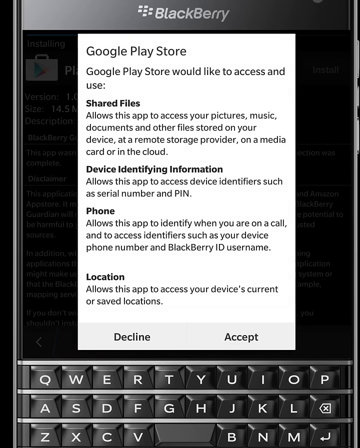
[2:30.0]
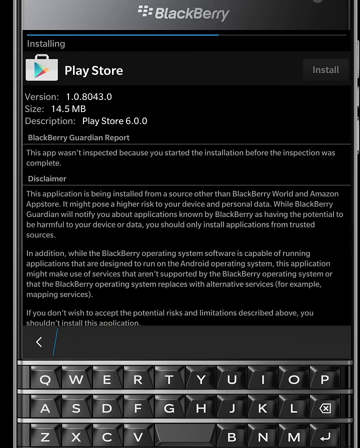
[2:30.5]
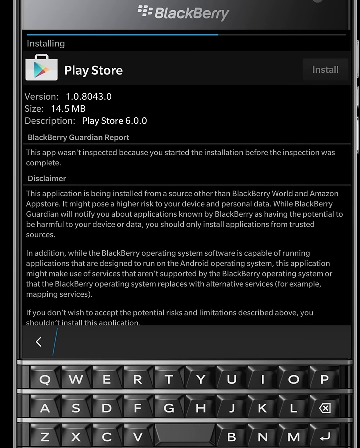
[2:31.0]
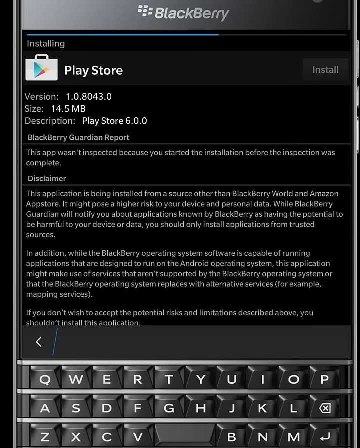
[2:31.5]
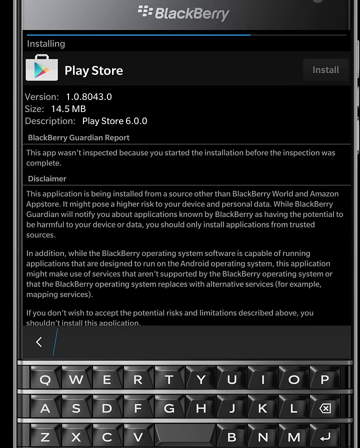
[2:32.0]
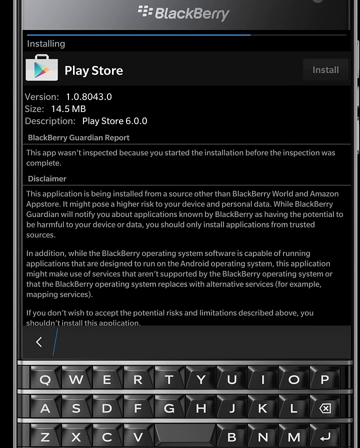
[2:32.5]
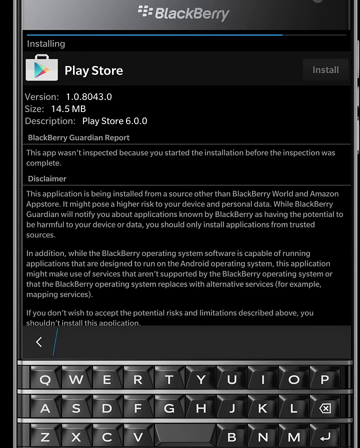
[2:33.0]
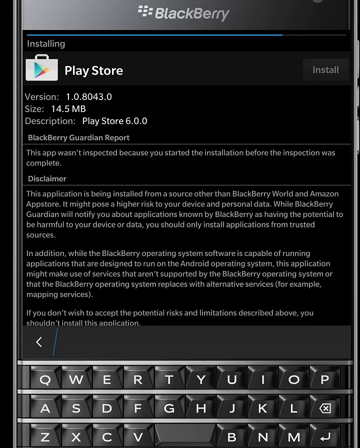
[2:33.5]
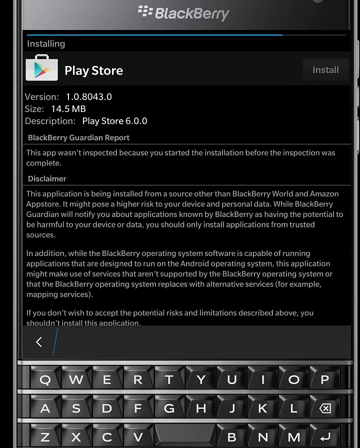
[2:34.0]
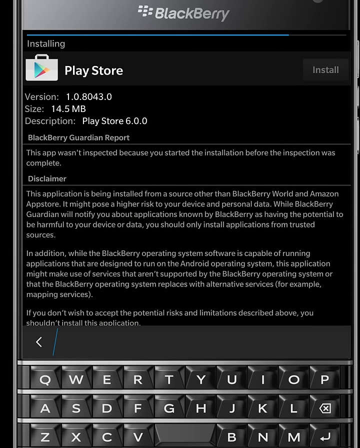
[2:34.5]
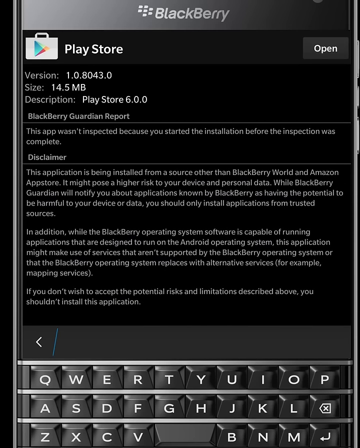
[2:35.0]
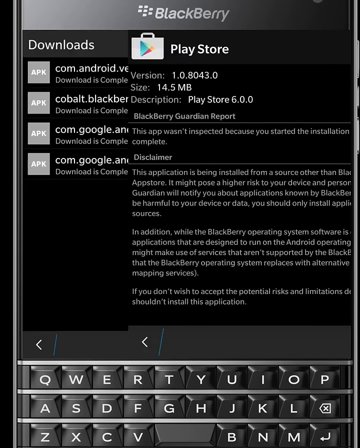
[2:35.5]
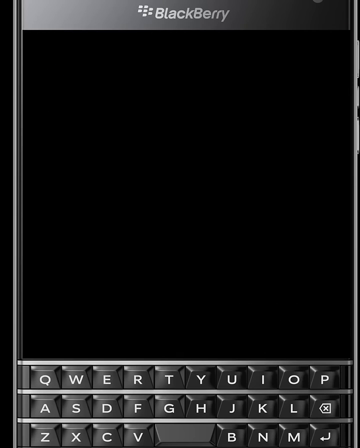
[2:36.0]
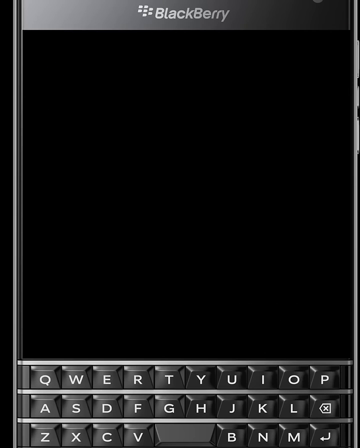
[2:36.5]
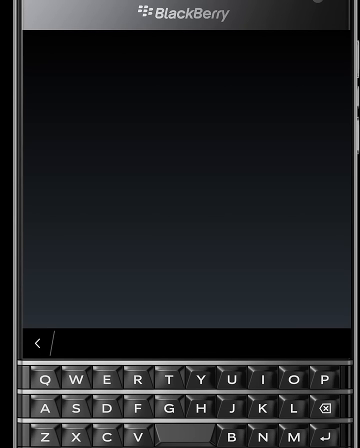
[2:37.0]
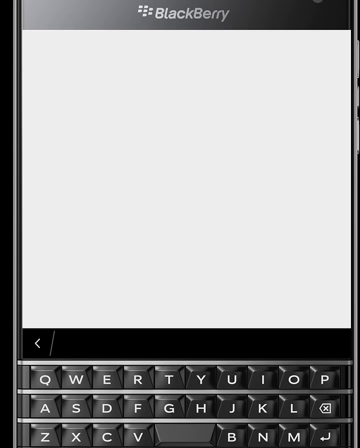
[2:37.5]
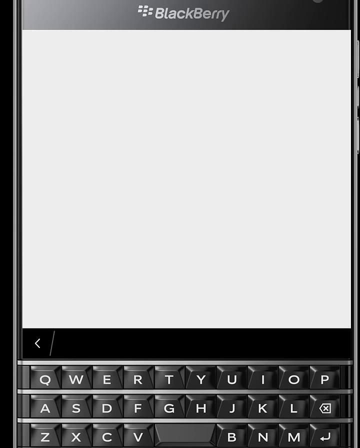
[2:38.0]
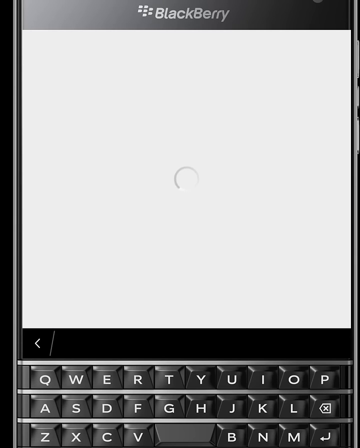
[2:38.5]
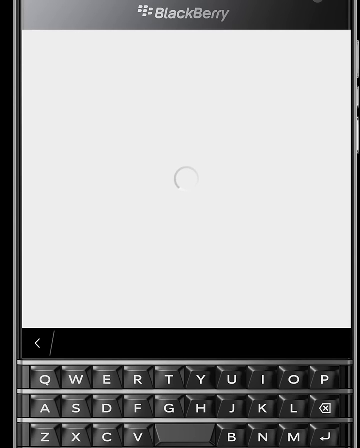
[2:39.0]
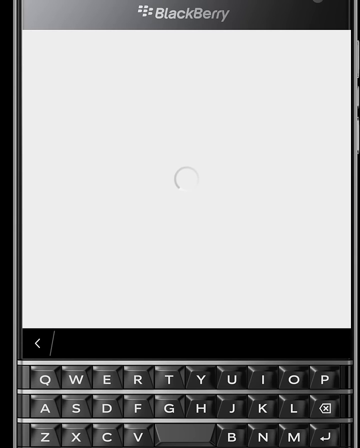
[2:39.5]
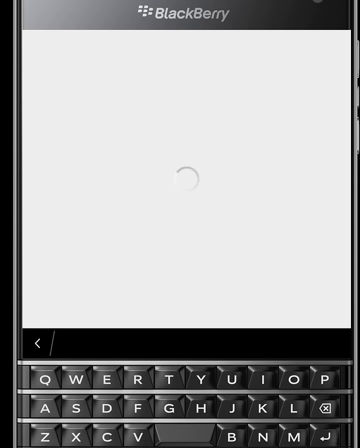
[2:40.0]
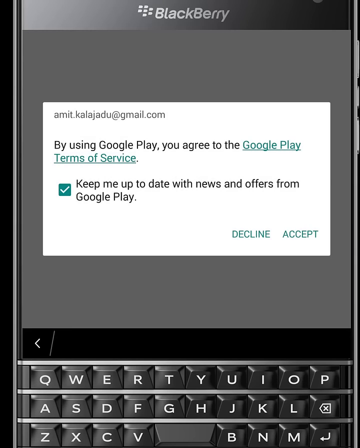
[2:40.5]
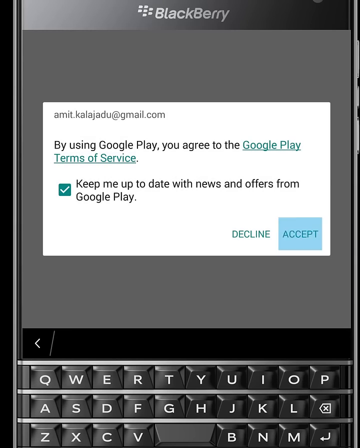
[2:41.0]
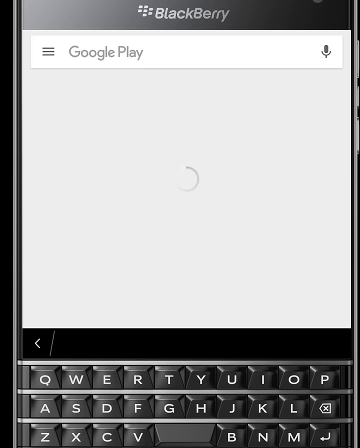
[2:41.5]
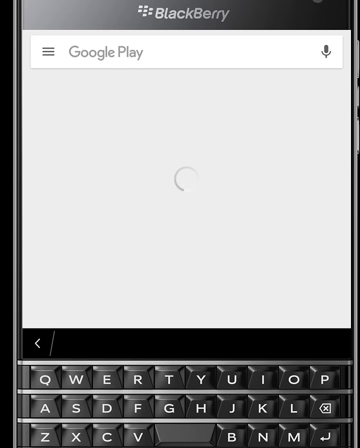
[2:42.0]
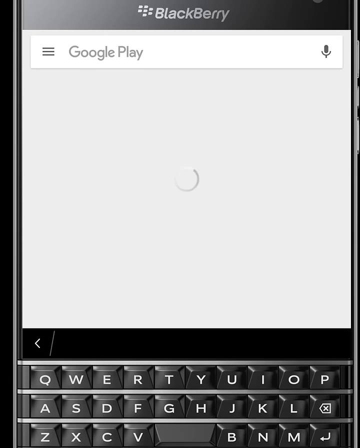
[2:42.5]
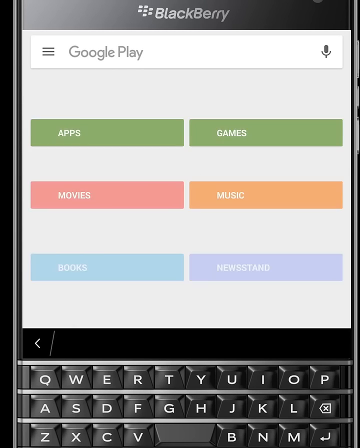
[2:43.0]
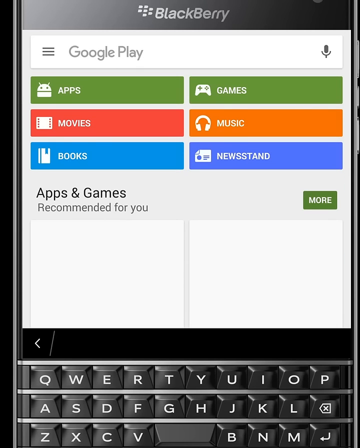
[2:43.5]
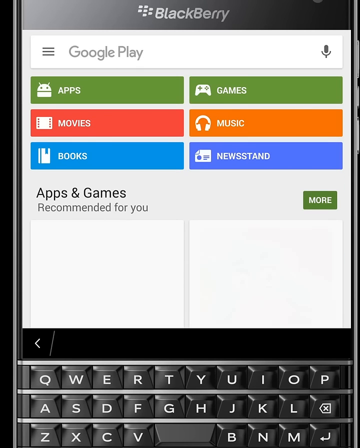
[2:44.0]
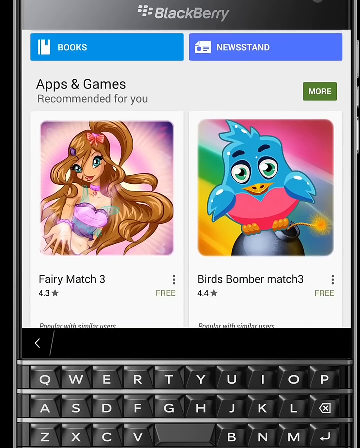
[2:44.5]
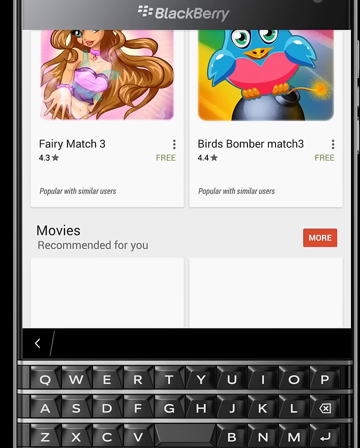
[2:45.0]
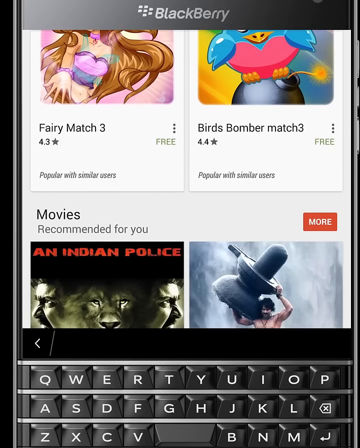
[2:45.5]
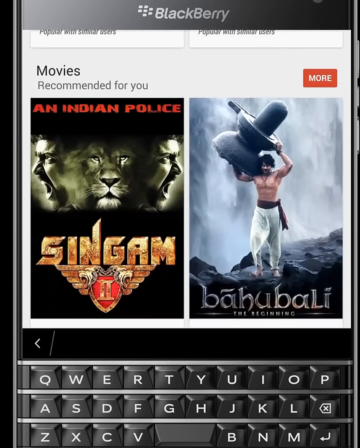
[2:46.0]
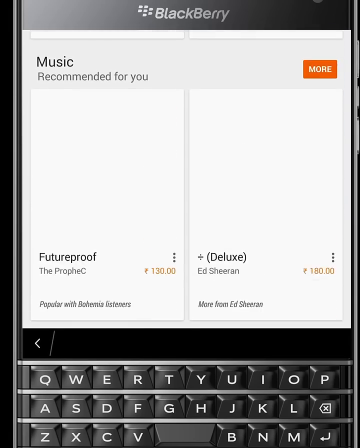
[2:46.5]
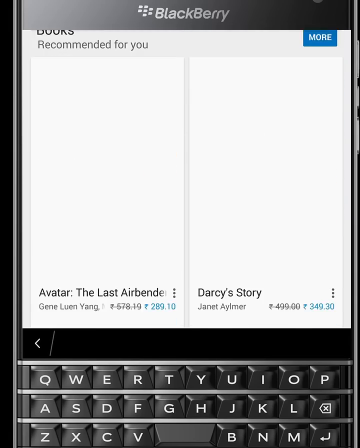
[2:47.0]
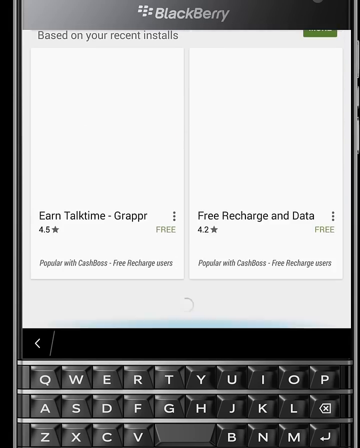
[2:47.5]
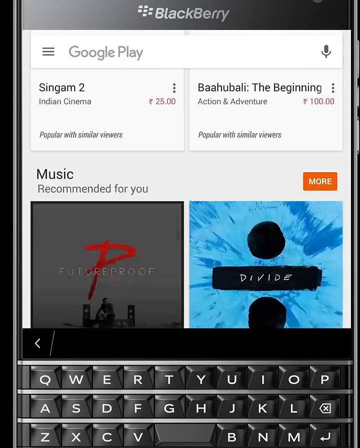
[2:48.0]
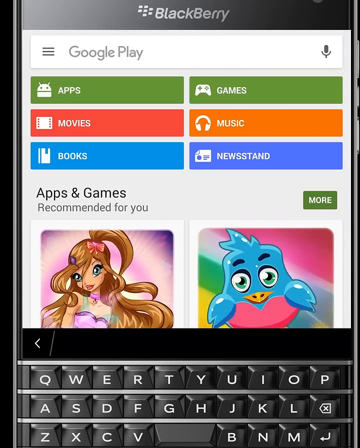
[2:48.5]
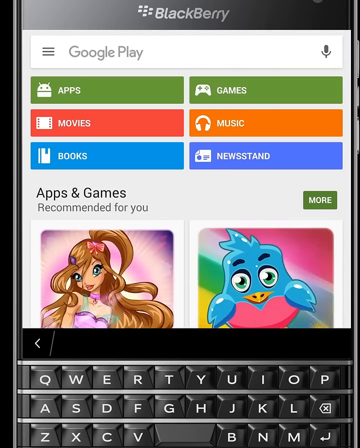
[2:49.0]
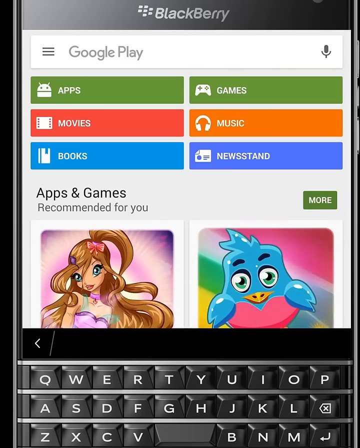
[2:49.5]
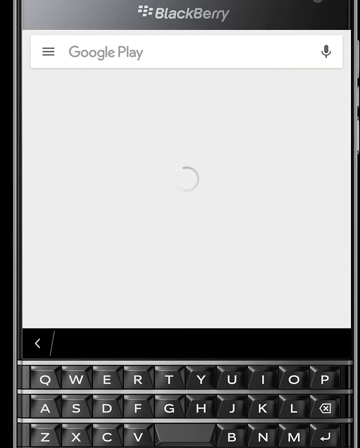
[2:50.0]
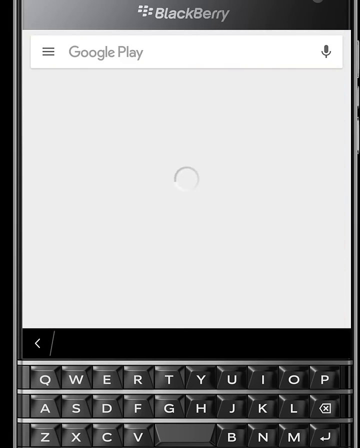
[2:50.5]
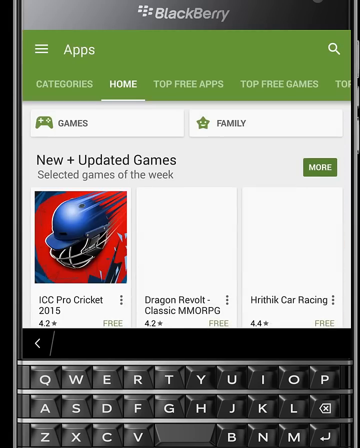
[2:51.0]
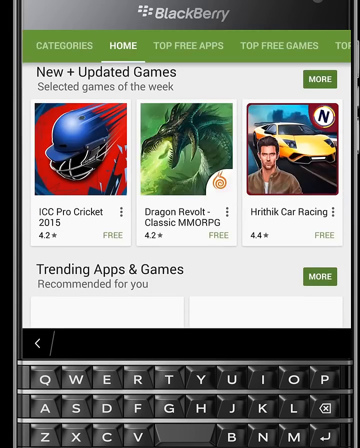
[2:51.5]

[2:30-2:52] The user appears to be giving the Google Play Store permission to access files, device identifying information, the phone and location, choosing whether to accept or decline the sharing of this information. They accept the permissions and make it all the way to the Play Store, apparently having added the Google Play Store to the BlackBerry phone. Something about updated games appears, possibly for some kind of testing or development of games.